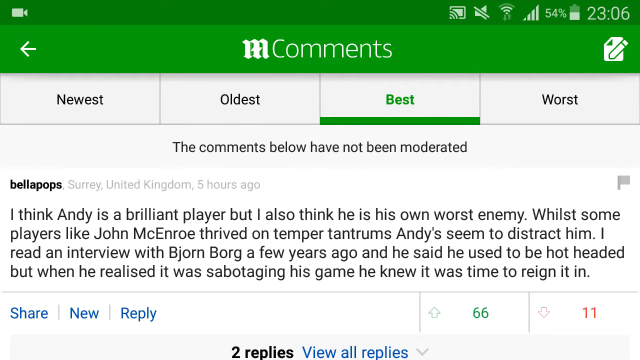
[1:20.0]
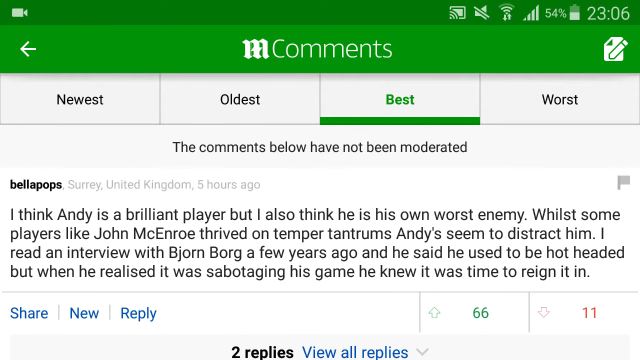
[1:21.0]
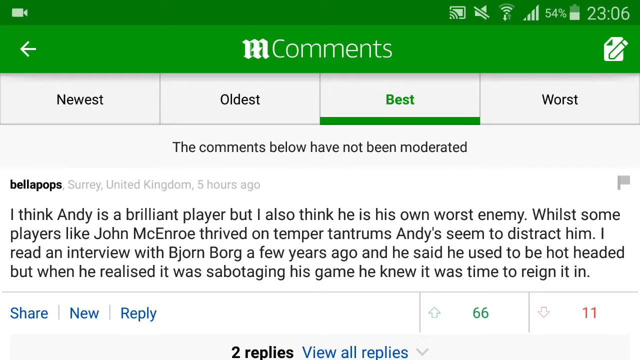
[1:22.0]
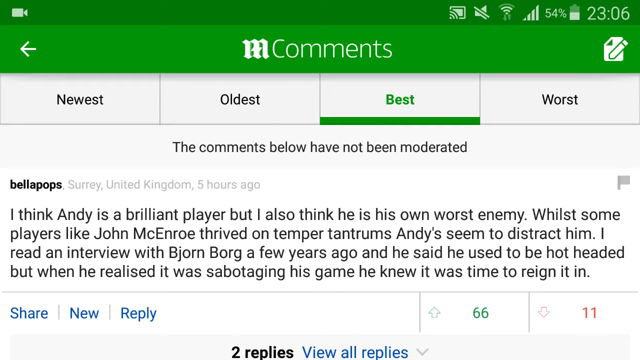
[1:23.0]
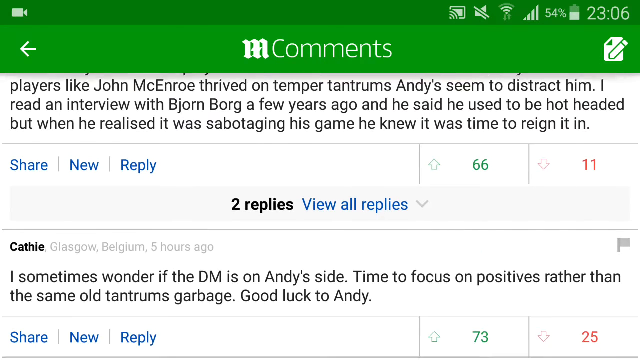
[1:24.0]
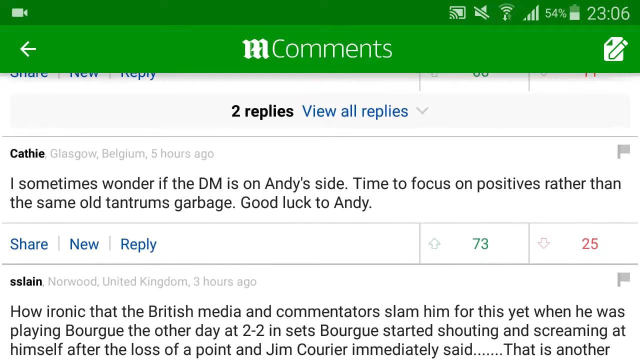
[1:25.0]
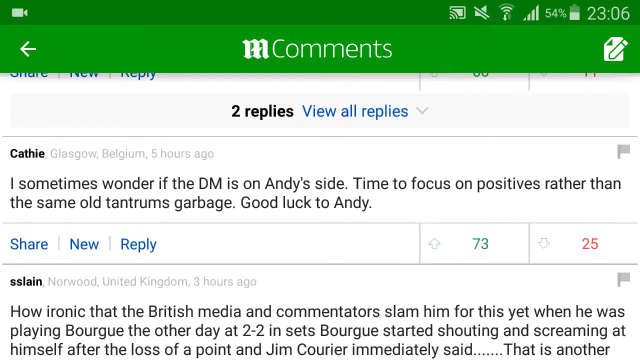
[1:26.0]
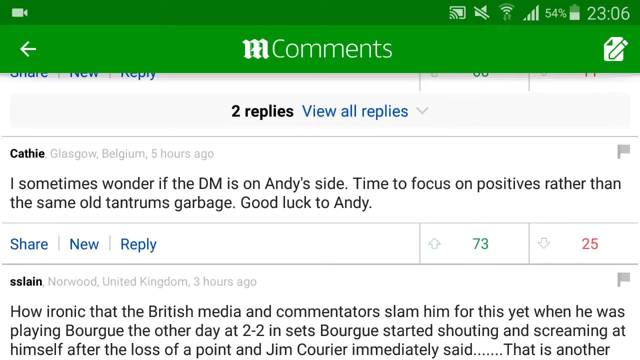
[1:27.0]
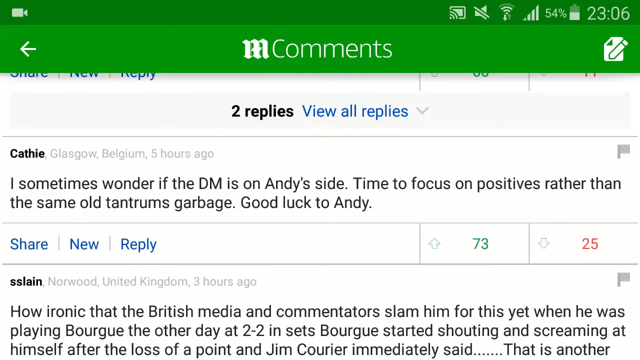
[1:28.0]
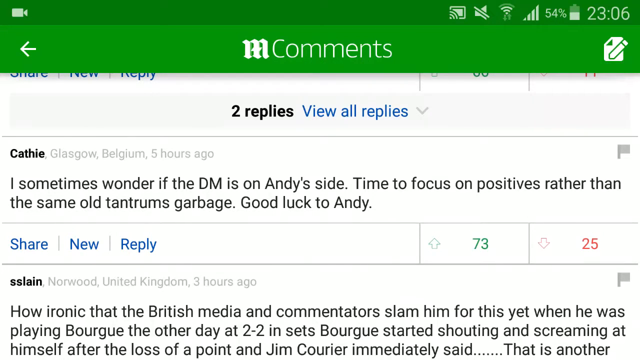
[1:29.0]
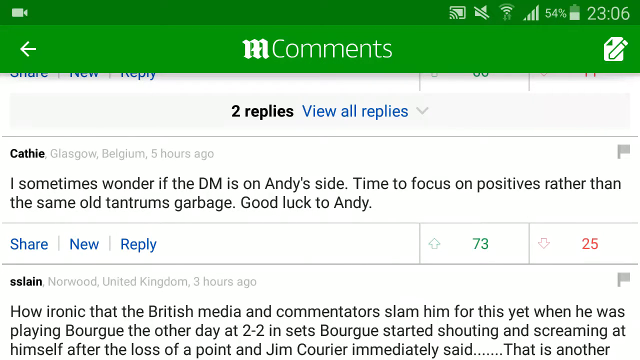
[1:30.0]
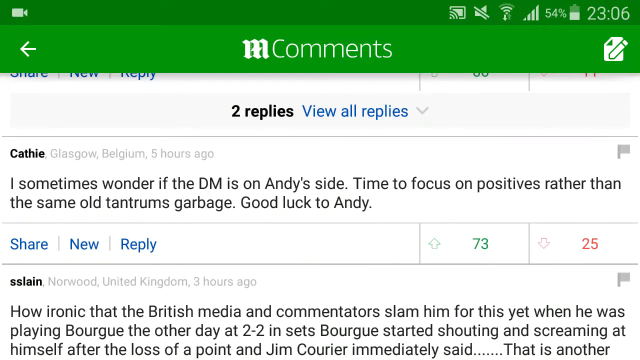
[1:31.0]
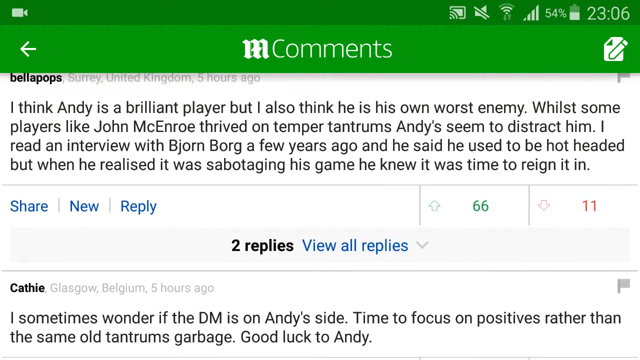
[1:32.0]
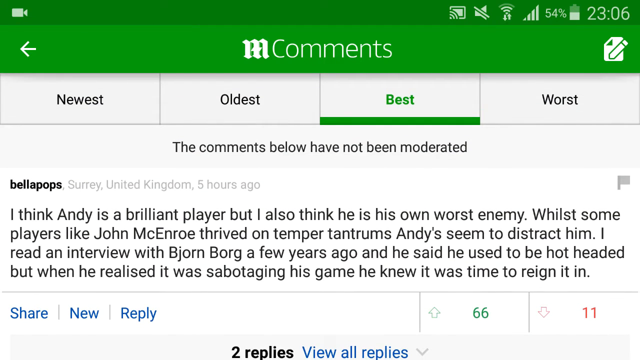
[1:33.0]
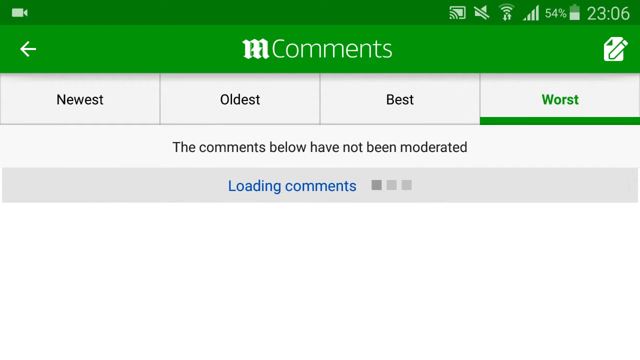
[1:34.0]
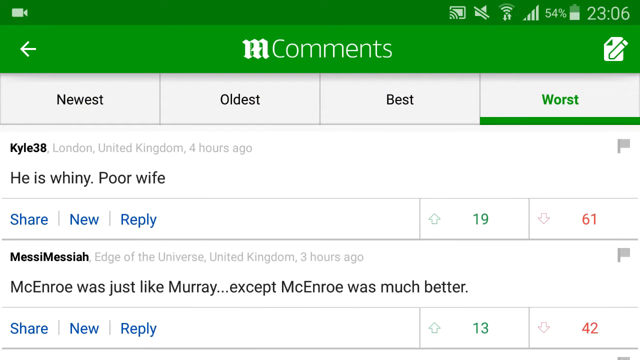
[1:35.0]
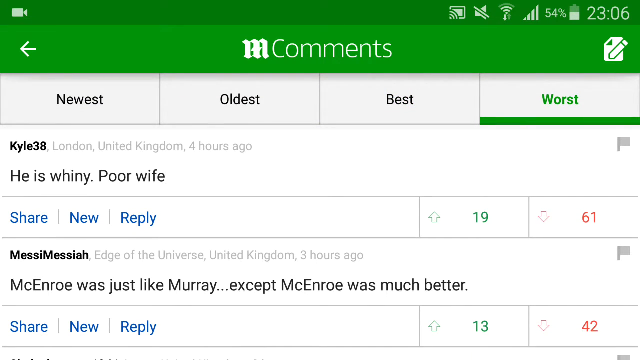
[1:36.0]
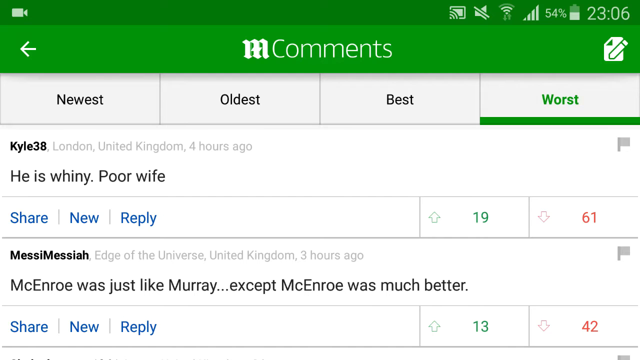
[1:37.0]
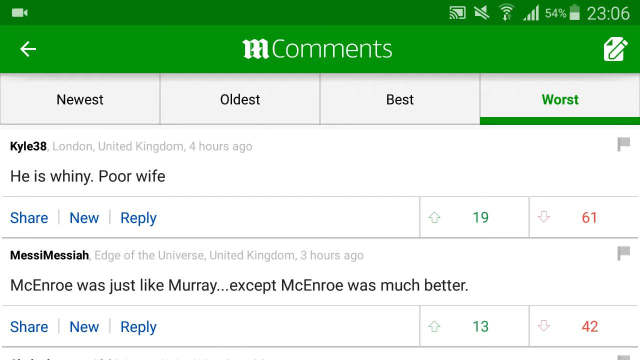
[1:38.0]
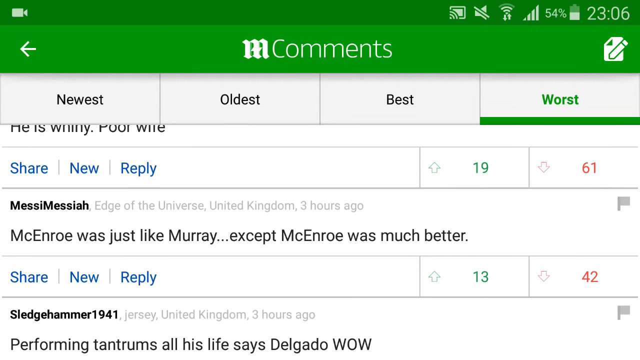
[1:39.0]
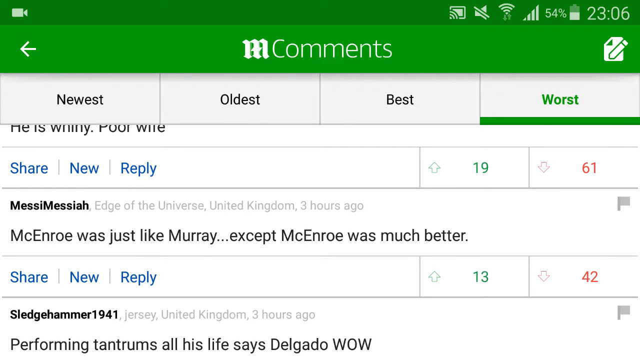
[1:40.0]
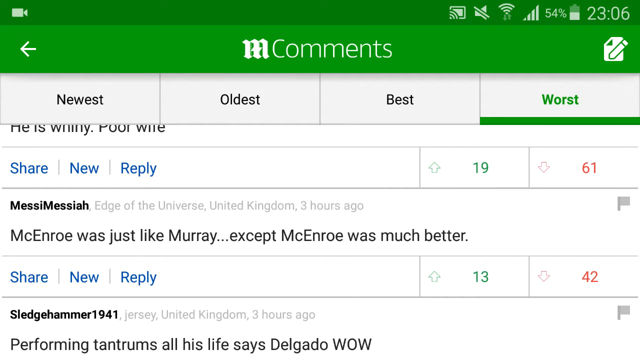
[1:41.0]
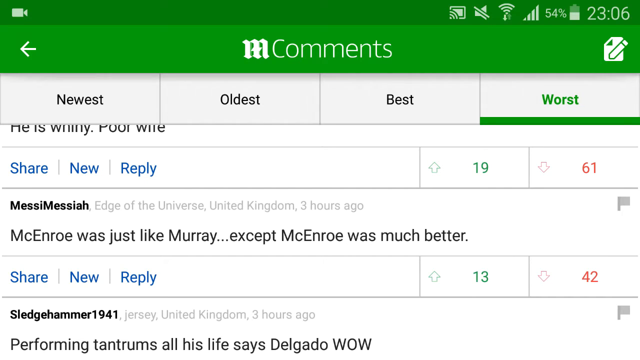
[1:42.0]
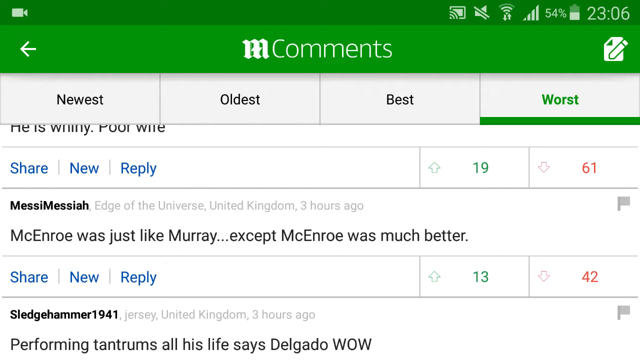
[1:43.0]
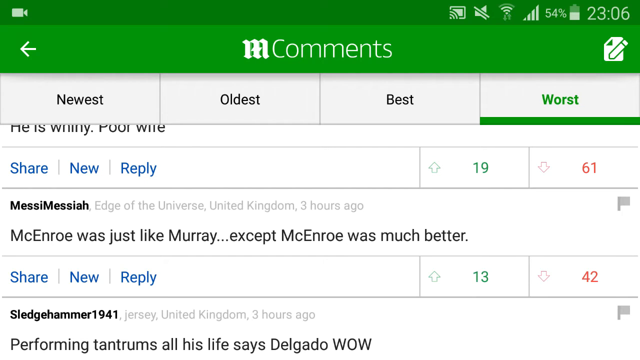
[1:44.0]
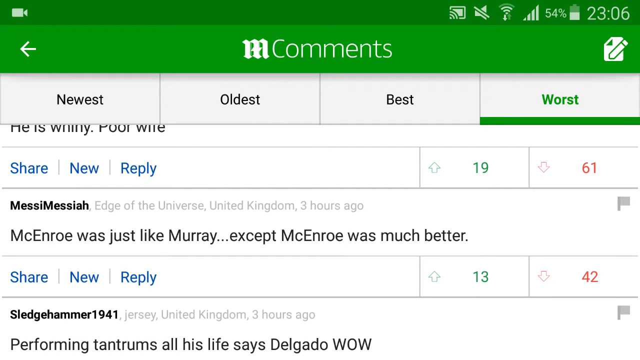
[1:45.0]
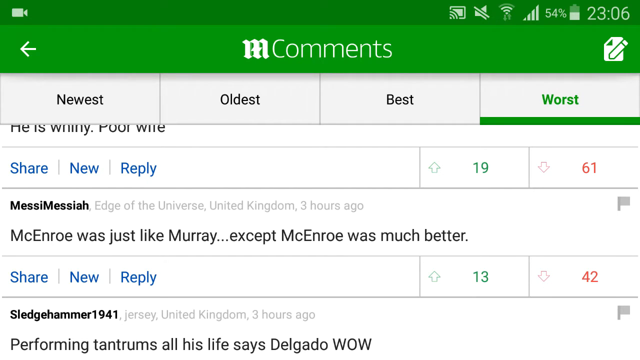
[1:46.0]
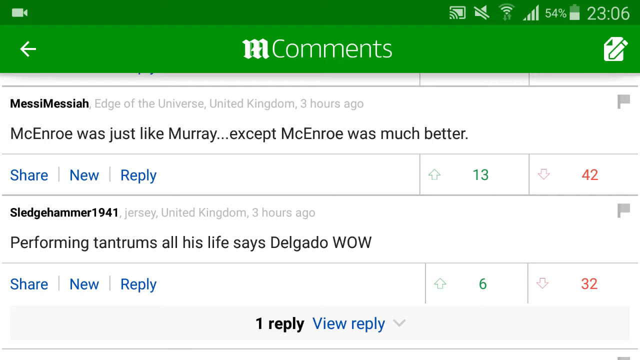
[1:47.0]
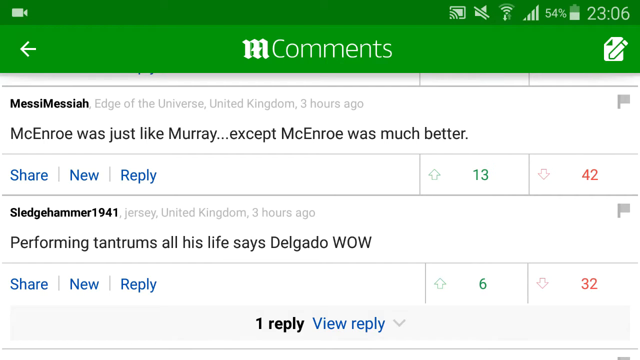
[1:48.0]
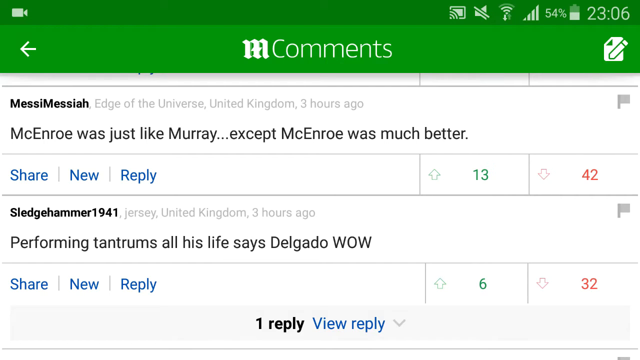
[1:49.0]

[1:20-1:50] On a mobile device, someone looks at the comments section of an online newspaper article about tennis player Andy Murray. The comments can be filtered by newest, oldest, best and worst, with best selected. Text below advises that the comments have not been moderated. A comment from Bella Pops says how good Andy Murray is but that he is his own worst enemy. The view scrolls down to replies discussing Andy Murray's tantrums, the focus of the article. Scrolling back up, the worst filter is selected, and Kylie38 has written "hideous whiny, poor wife", posted from London, United Kingdom, four hours ago. Another comment compares Murray to McEnroe. To the right of each comment are up and down vote options. The comments are all about his tantrums.